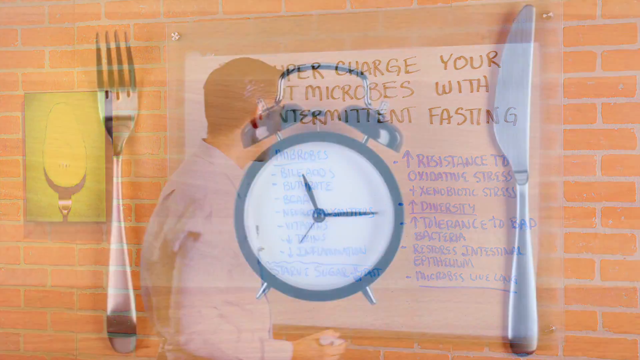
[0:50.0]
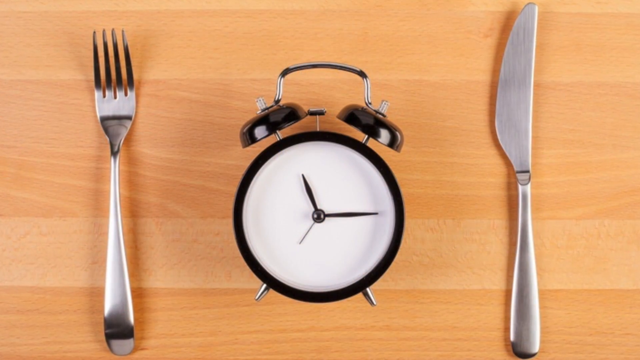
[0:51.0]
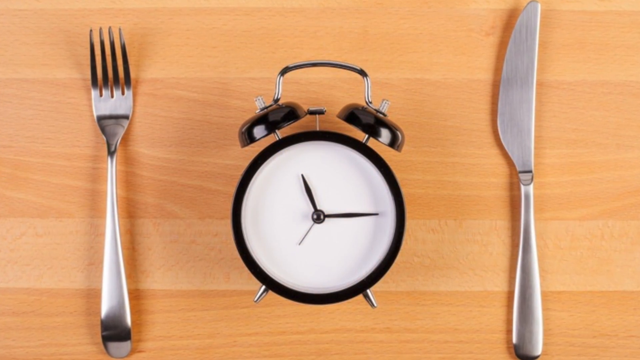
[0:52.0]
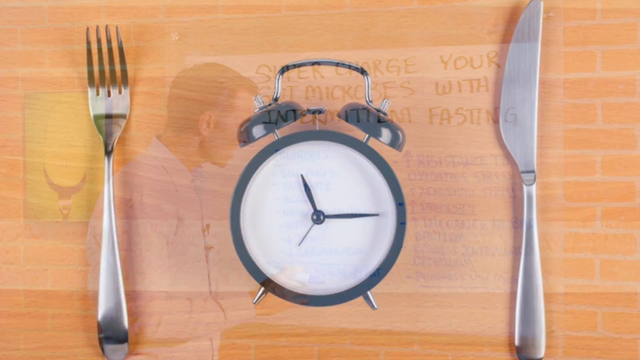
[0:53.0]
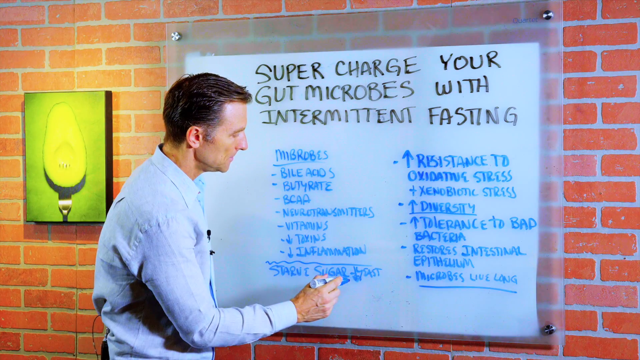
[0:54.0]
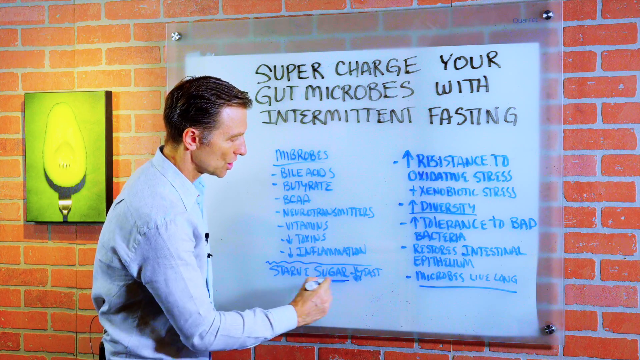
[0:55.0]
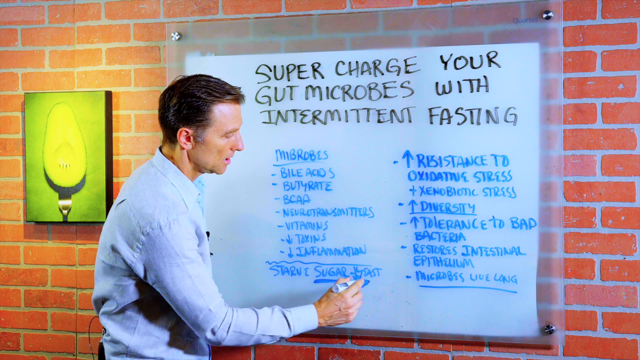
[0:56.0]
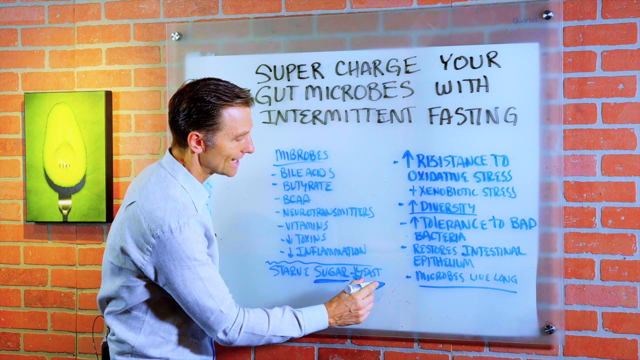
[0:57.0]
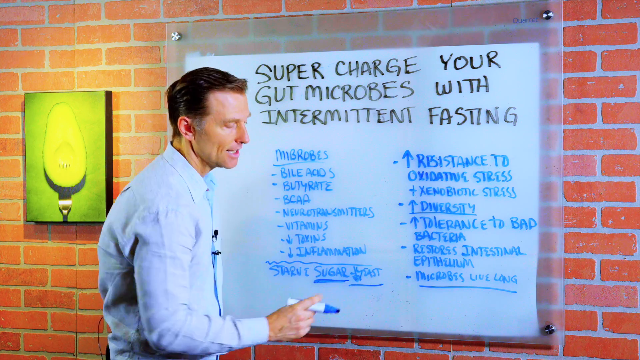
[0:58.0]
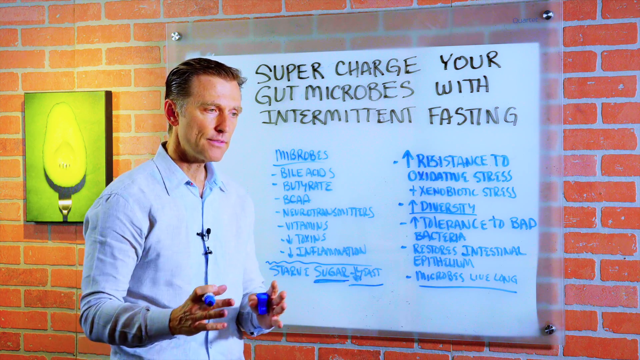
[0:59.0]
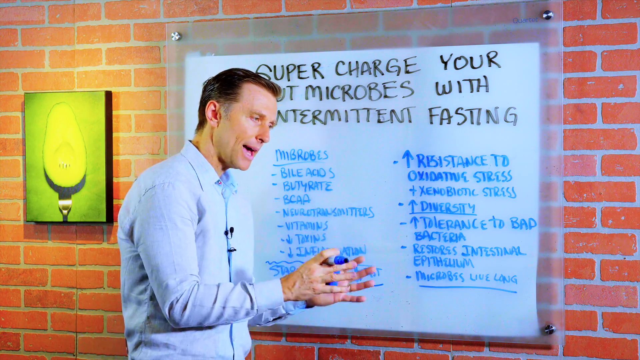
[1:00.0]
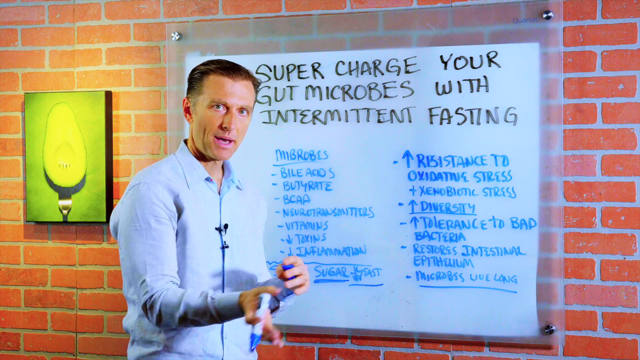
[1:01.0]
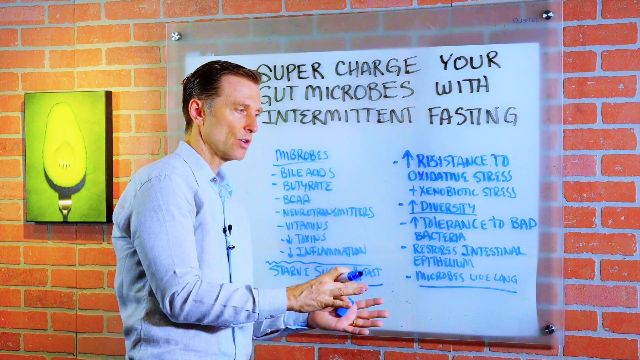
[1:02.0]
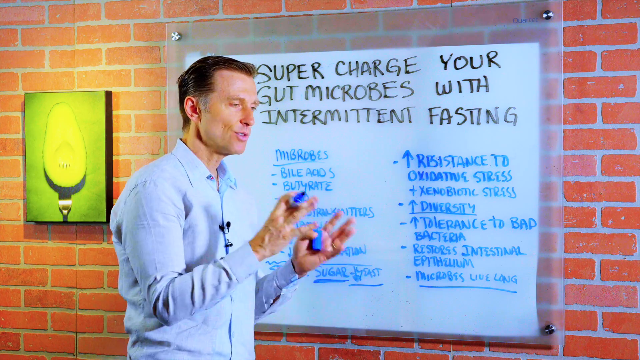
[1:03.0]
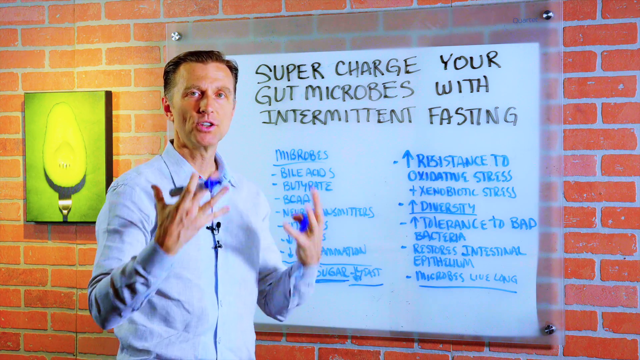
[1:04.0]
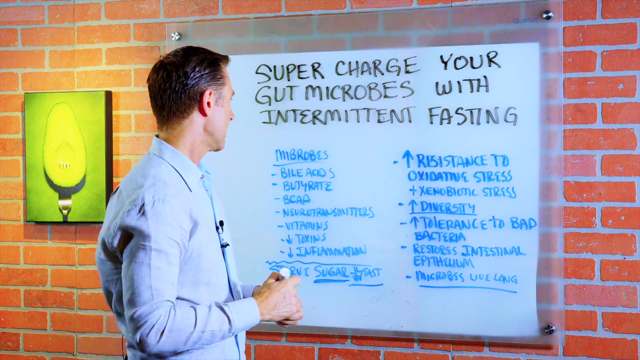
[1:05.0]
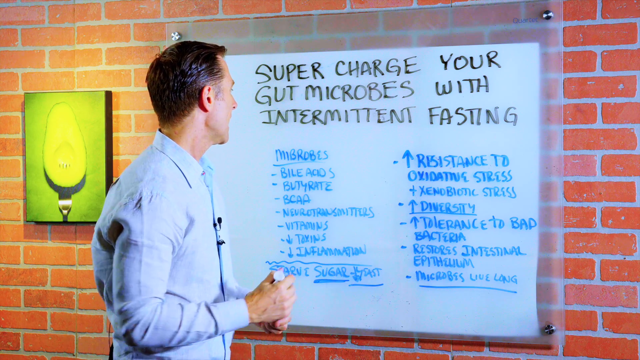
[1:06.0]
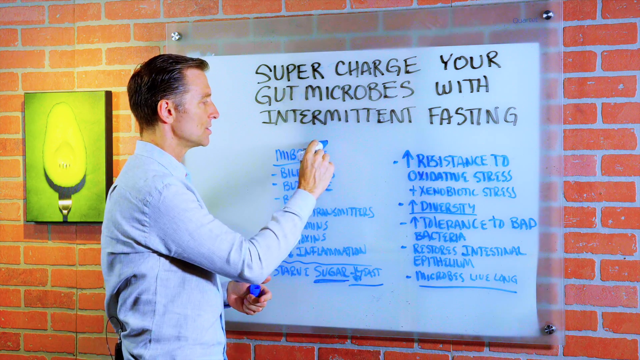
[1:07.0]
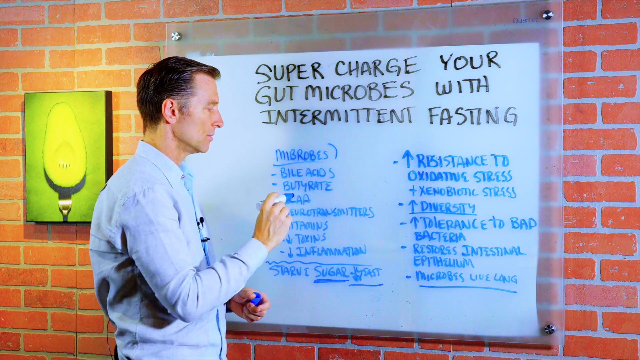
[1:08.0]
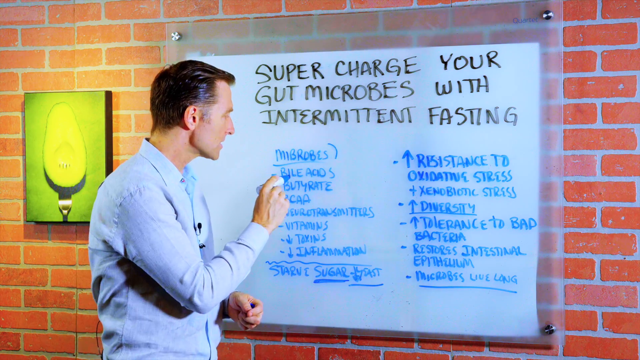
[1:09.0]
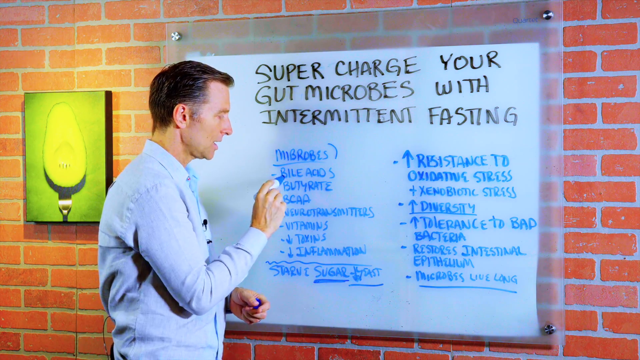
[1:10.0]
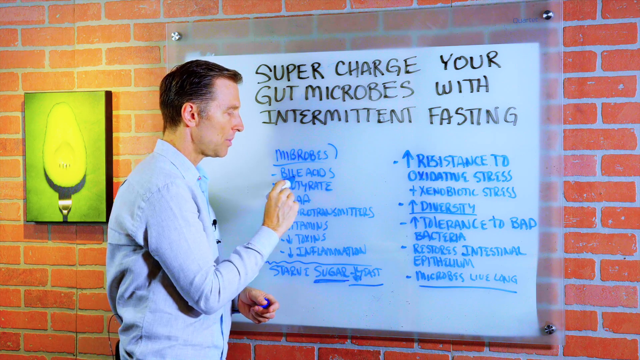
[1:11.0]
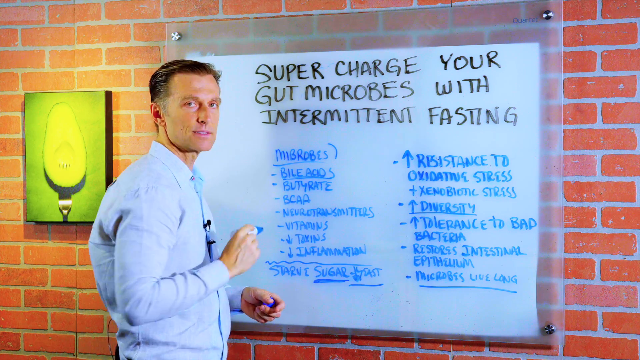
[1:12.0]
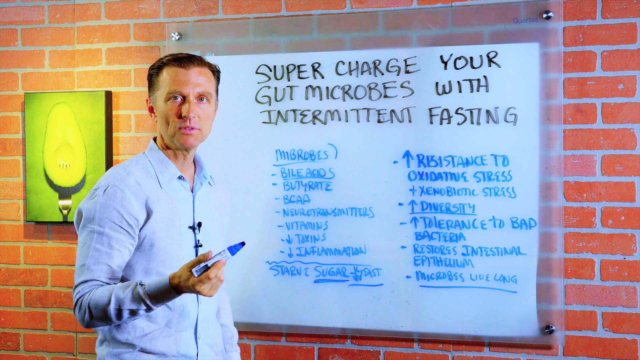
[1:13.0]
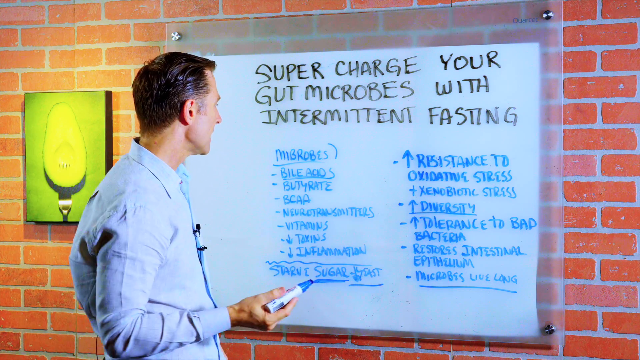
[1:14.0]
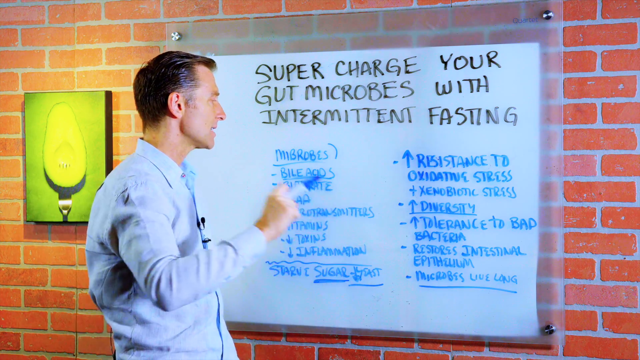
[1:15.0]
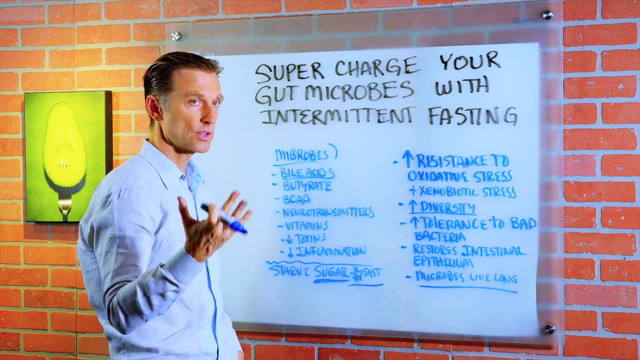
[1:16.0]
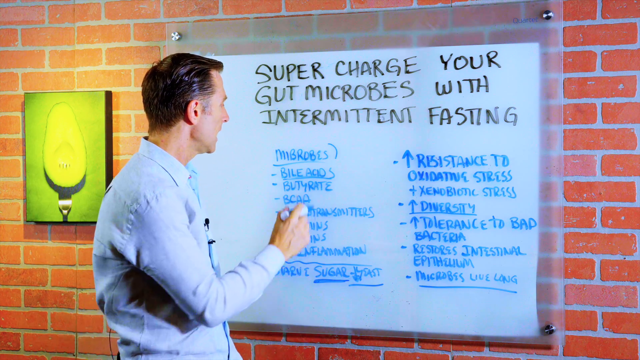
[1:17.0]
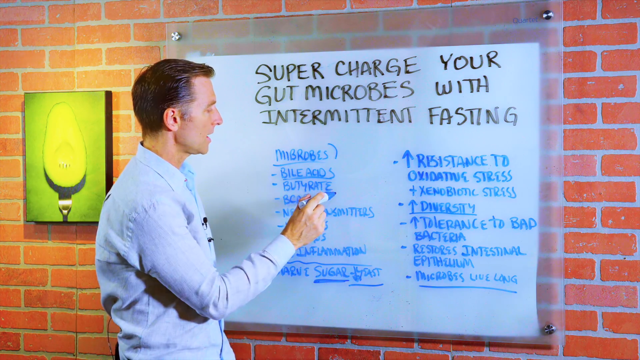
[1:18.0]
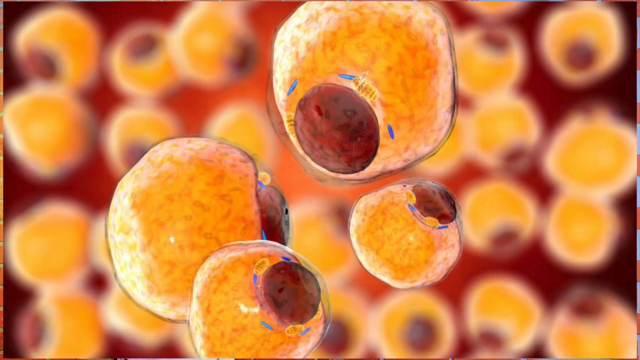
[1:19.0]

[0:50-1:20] An old-fashioned alarm clock with a black round frame, a white face, and three black hands (minute, second, and hour) appears, with a fork on its left and a knife on its right. All three objects are placed against a backdrop that looks like a wooden table. Next, a man holds a marker and uses it to underline a word on the whiteboard in front of him. The square-framed whiteboard is placed against an orange brick wall, and to the man's left is a green artwork on the wall. He underlines the word "sugar," written in blue as the last word of the left column. He then speaks again, standing upright, looking at the camera and gesturing with both hands. Next, he marks beside the word "microbes" as he continues speaking, still gesturing and holding the blue marker in his left hand.